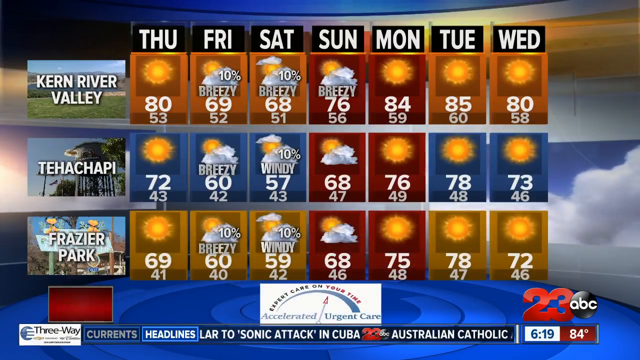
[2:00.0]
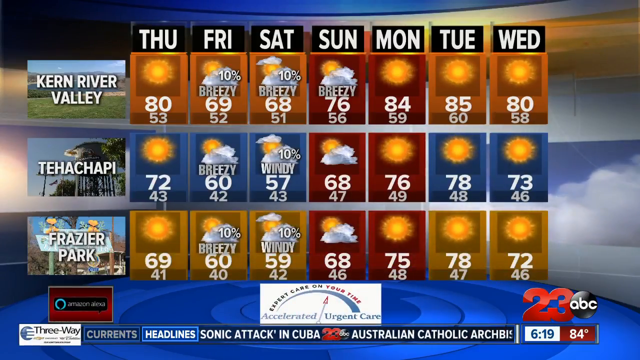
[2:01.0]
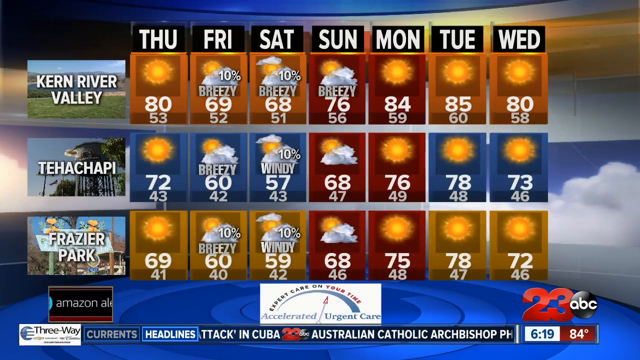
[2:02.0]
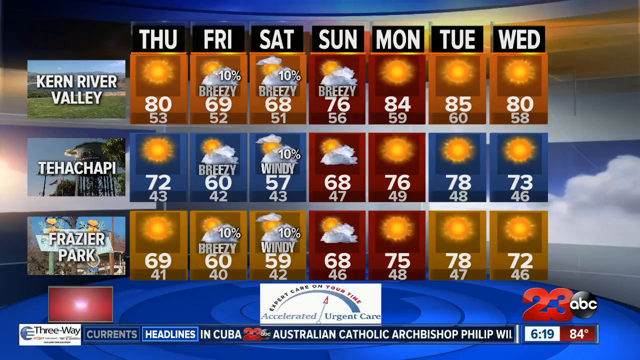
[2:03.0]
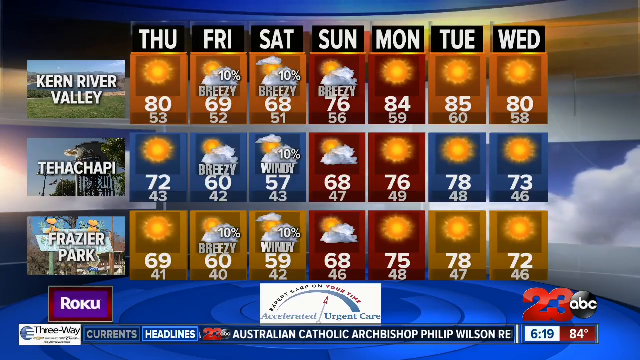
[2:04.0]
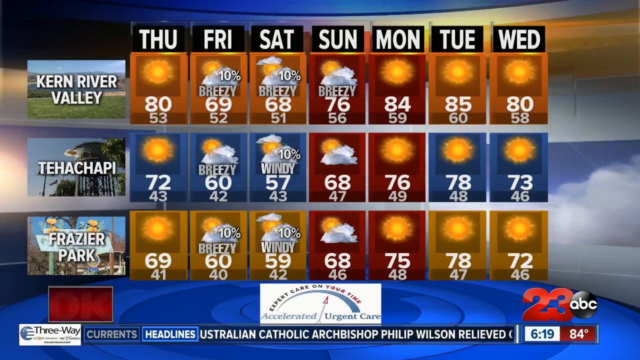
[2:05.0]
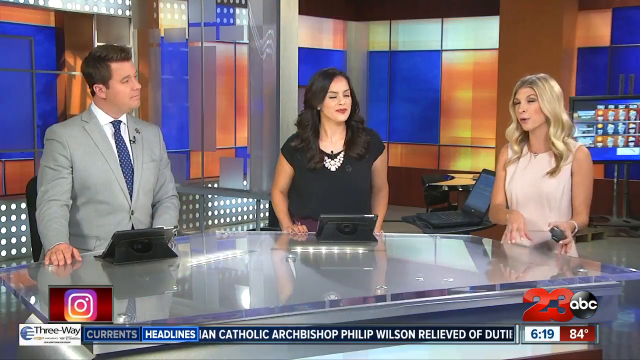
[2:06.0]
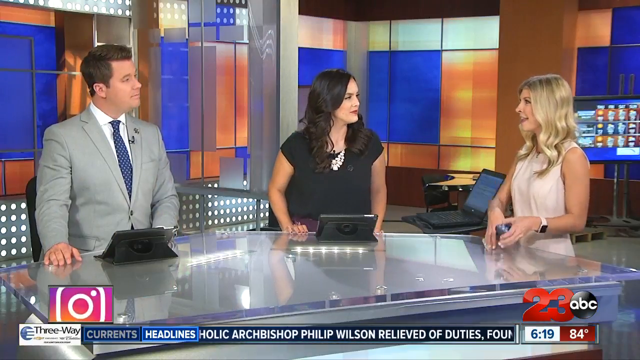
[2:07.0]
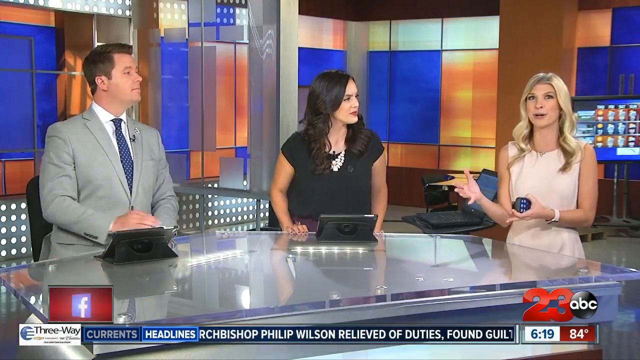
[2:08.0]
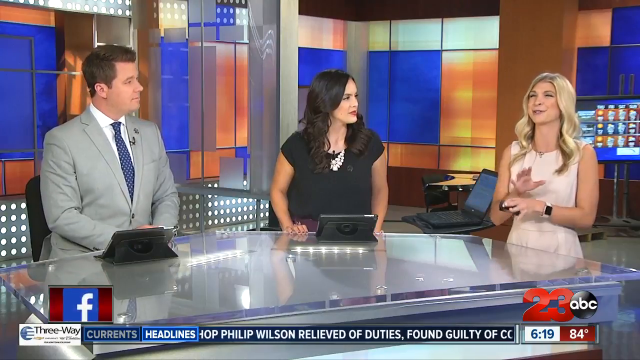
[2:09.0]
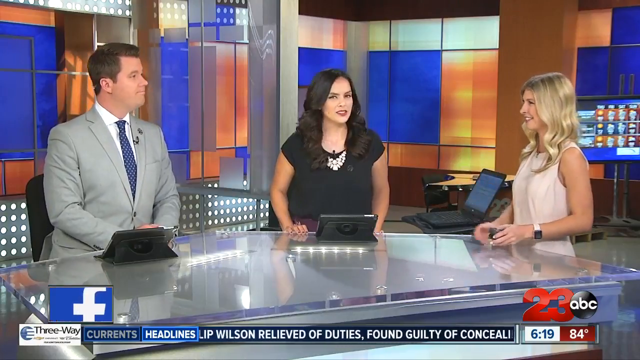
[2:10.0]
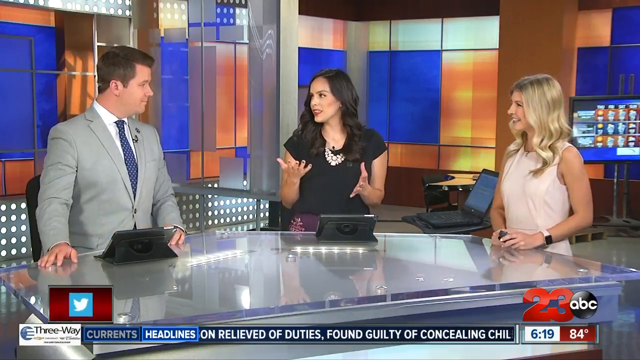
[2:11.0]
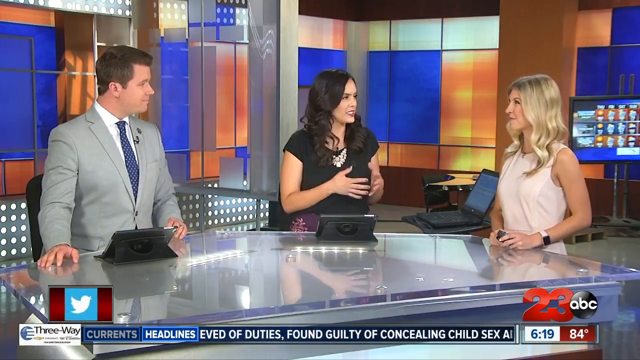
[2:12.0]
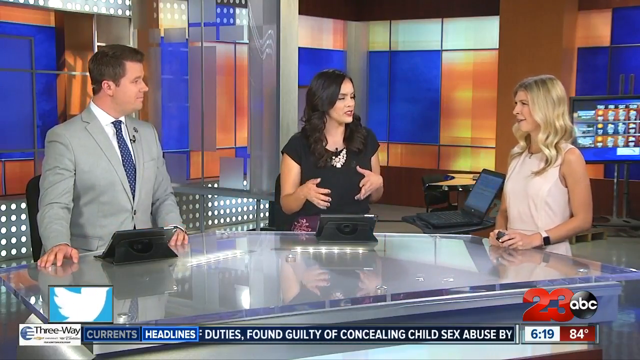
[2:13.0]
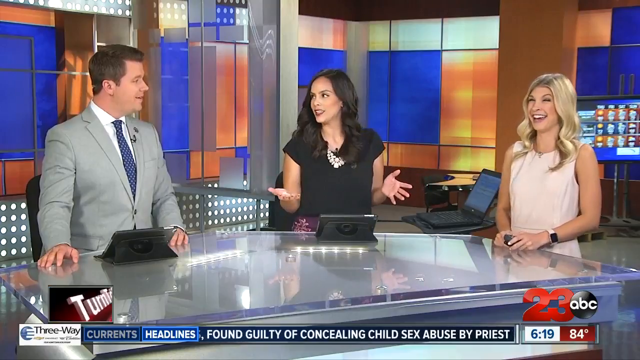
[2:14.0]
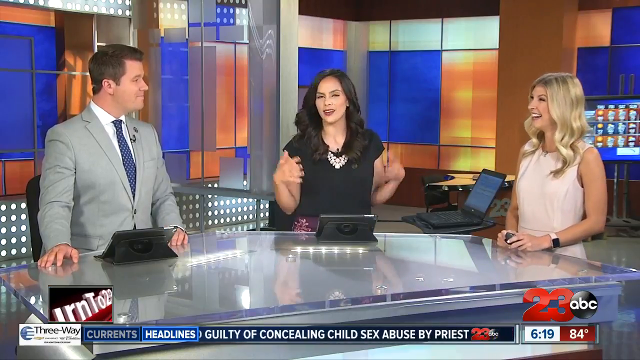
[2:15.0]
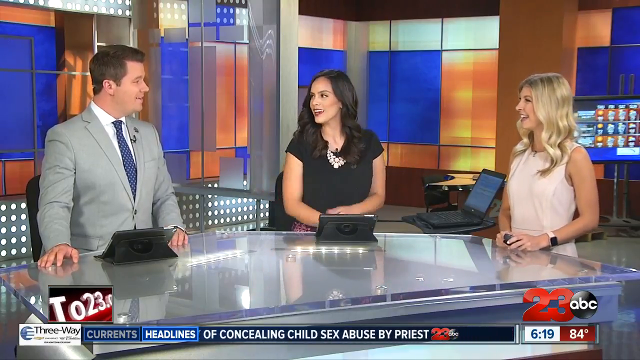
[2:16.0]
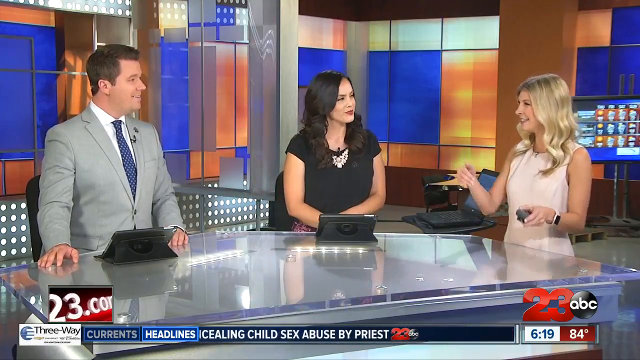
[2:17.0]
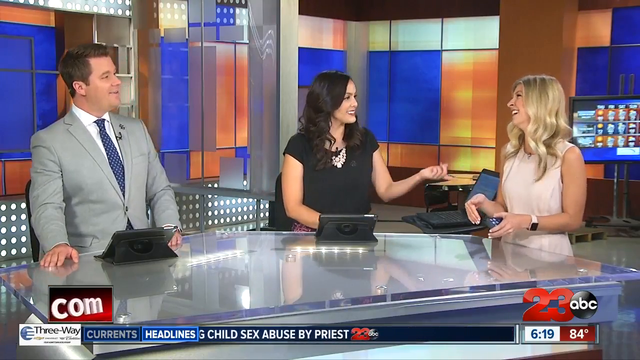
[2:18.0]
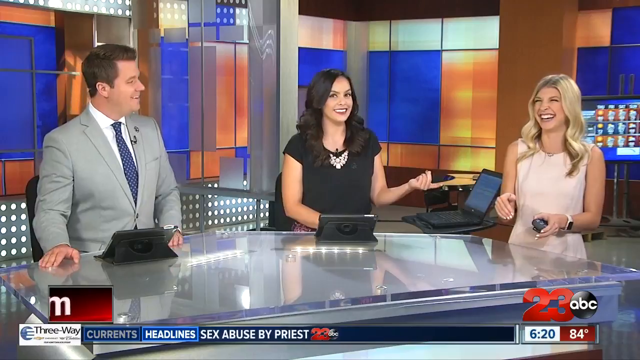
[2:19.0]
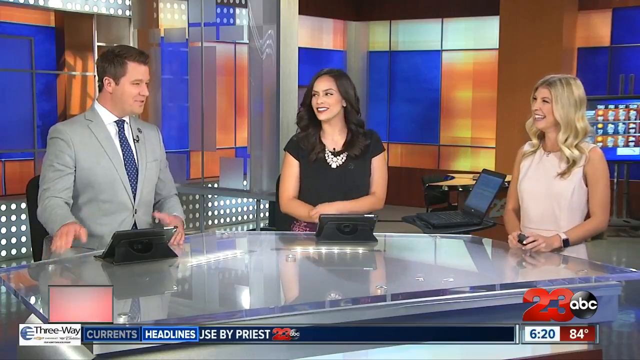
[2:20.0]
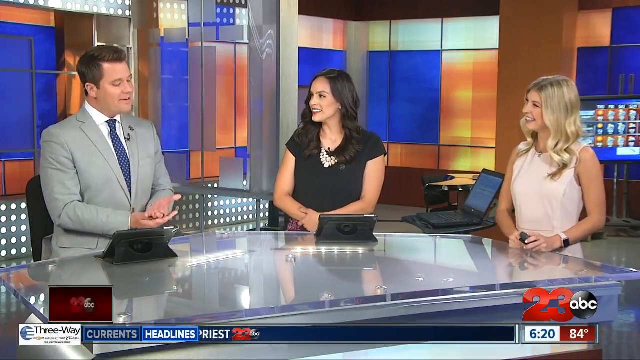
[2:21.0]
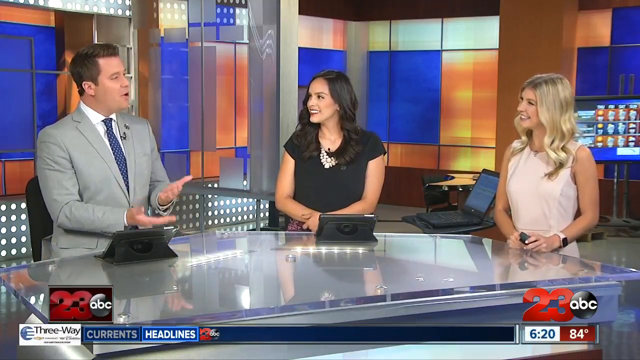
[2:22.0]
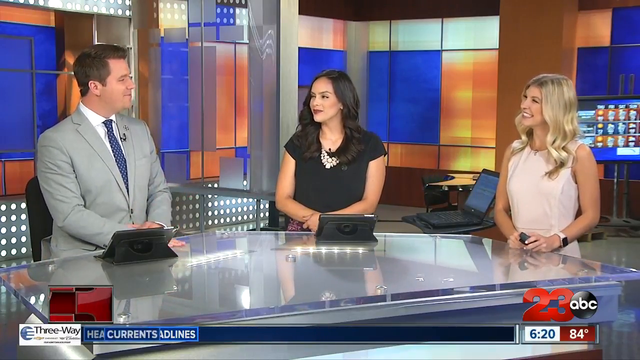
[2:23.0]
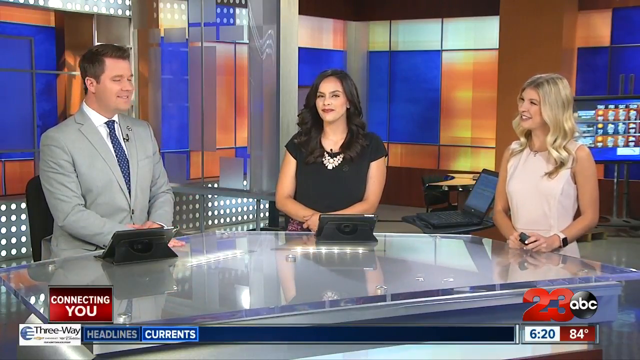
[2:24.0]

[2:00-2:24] The weather forecast from Thursday to Wednesday for three cities, Kern River Valley, Tehachapi and Frazier Park, is on screen. It shows the maximum and minimum temperatures for each city and each day, the probability of rain, and whether the wind will be light, breezy, windy or strong. Tehachapi seems to have the lowest temperatures and Kern River Valley the highest, both maximums and minimums. Behind the graphic an animation of clouds appears, and then the shot changes to the studio, where the weather girl is sitting next to the host and the hostess of the news TV show. She seems to be explaining something about the weather and seems to make a happy comment, and then the hostess comments something to her colleague. They seem to be laughing and having fun, making light-hearted commentary about the weather.